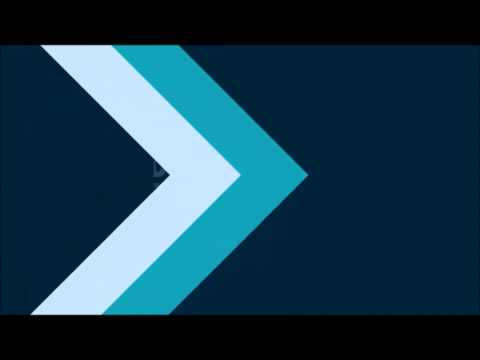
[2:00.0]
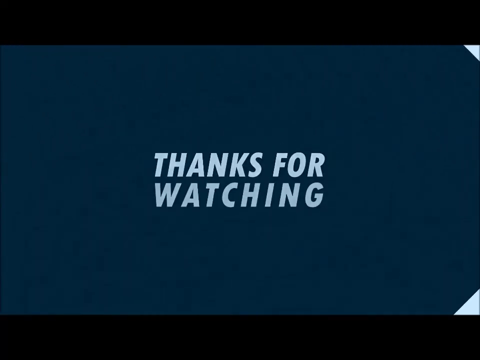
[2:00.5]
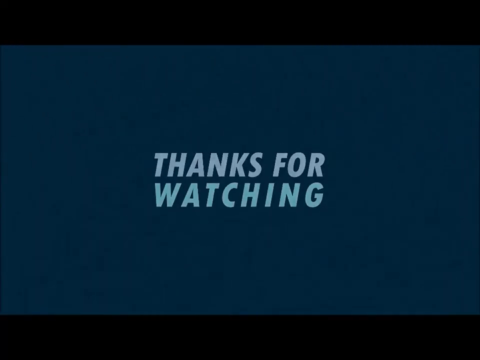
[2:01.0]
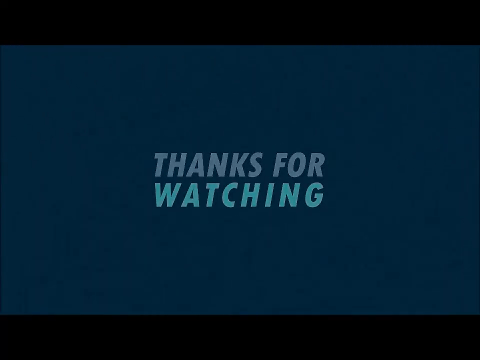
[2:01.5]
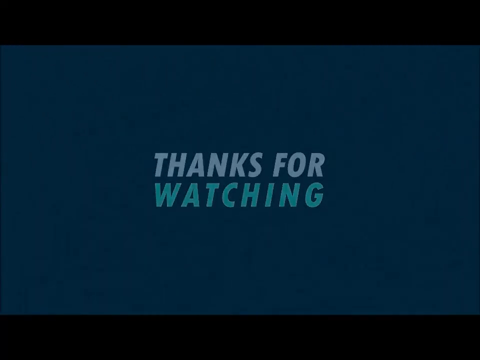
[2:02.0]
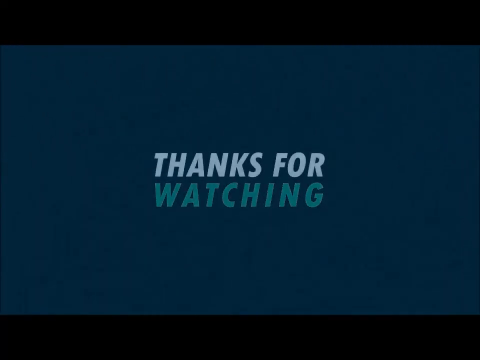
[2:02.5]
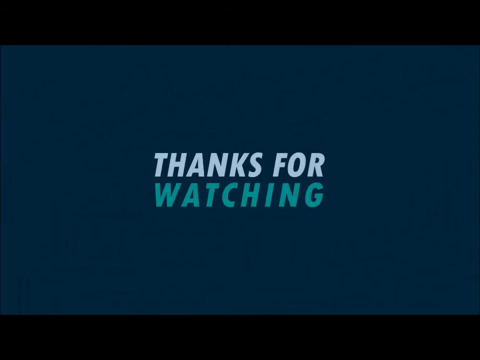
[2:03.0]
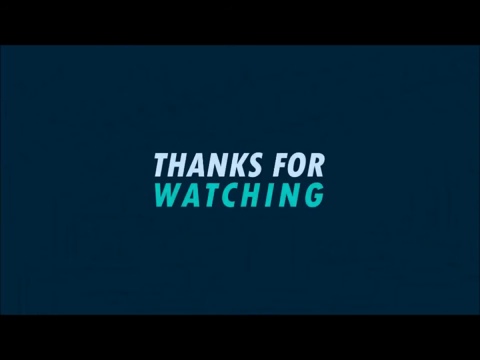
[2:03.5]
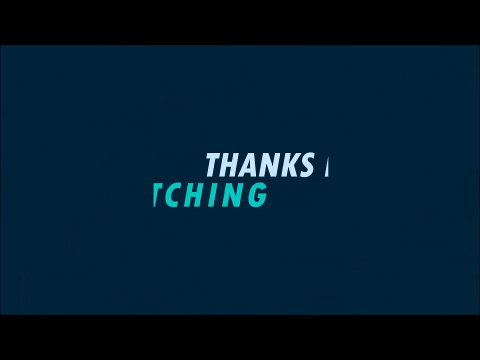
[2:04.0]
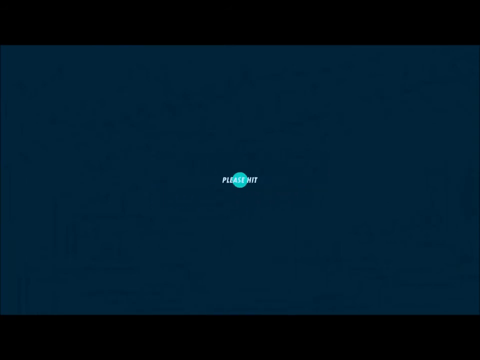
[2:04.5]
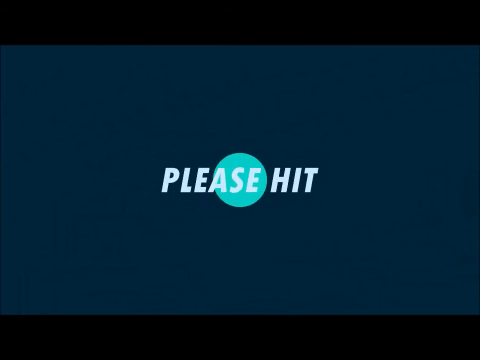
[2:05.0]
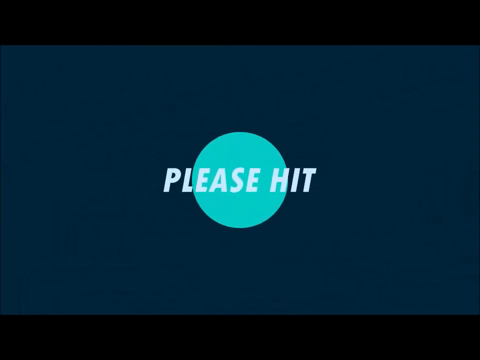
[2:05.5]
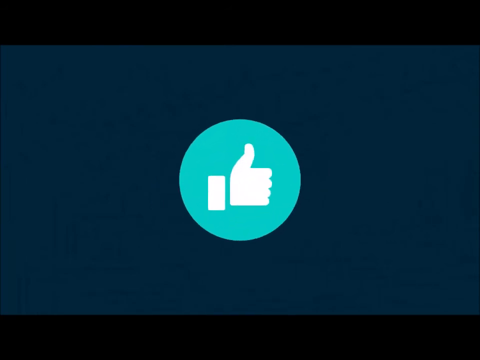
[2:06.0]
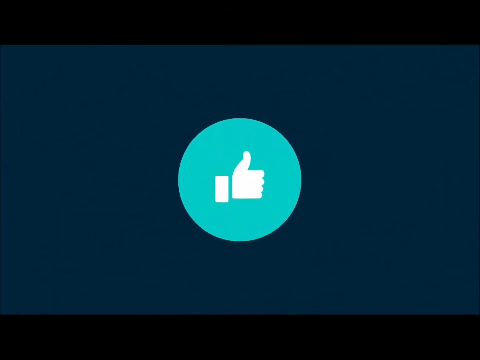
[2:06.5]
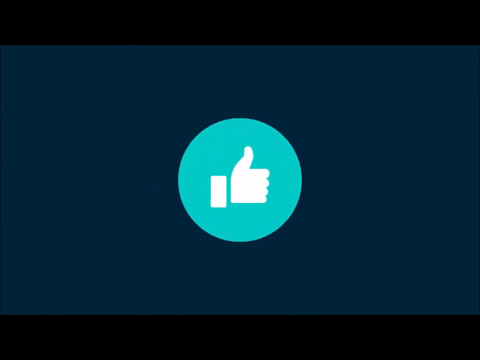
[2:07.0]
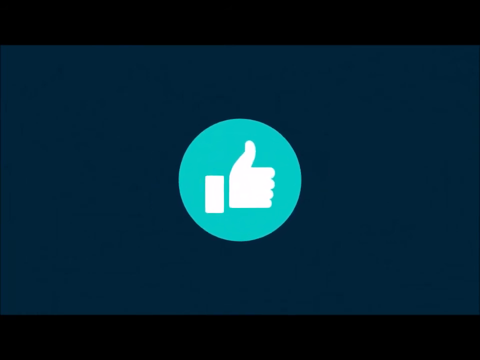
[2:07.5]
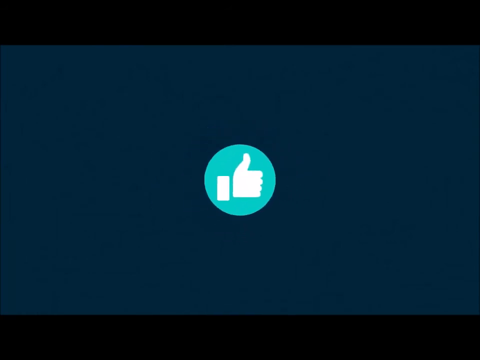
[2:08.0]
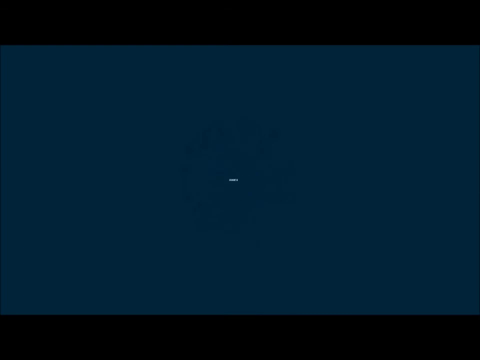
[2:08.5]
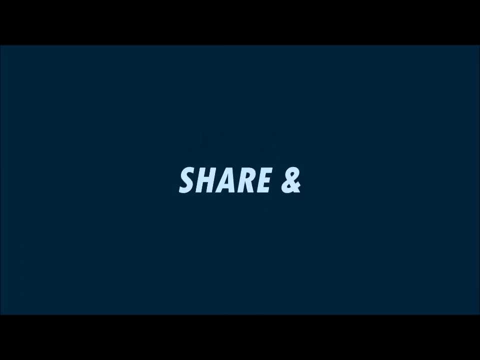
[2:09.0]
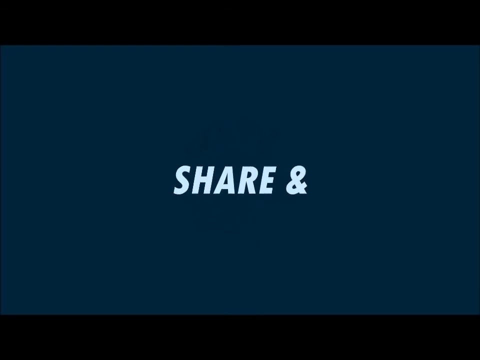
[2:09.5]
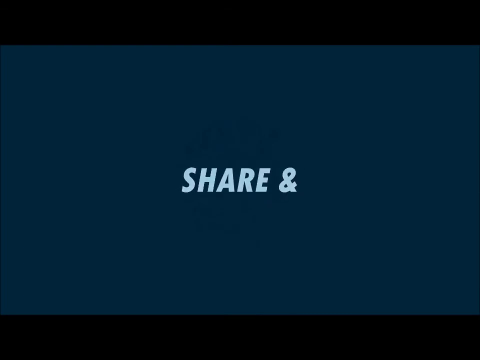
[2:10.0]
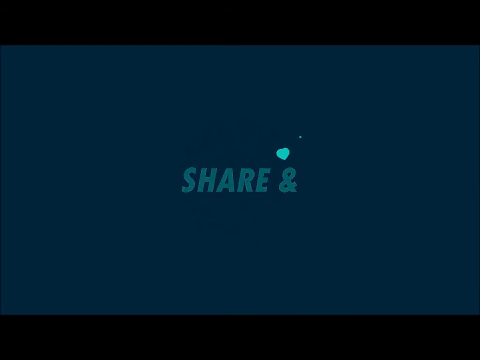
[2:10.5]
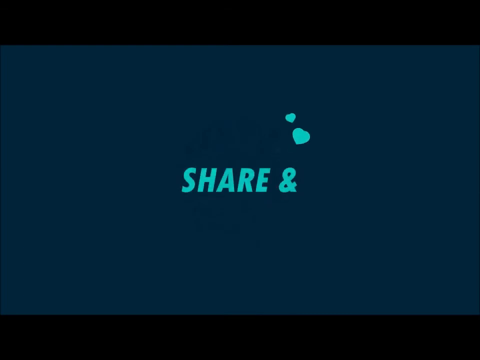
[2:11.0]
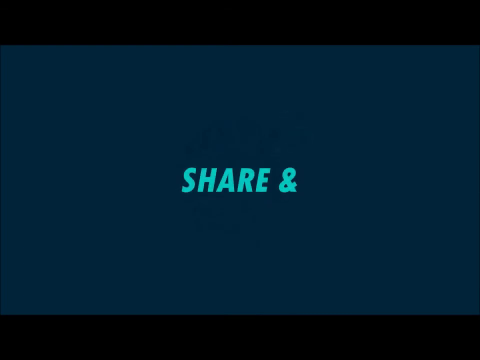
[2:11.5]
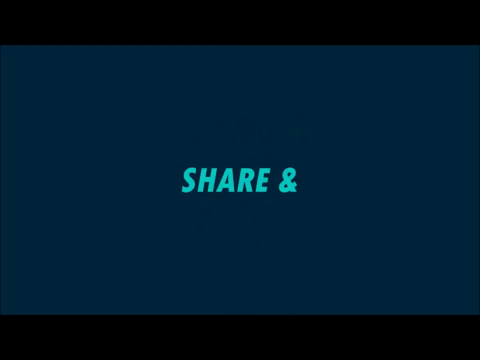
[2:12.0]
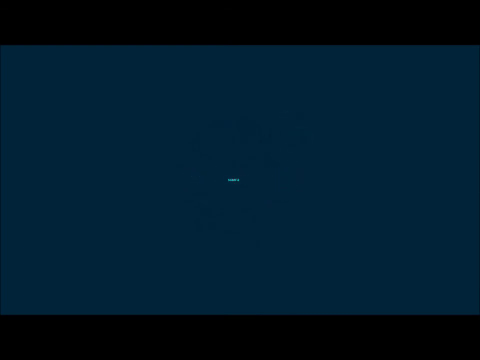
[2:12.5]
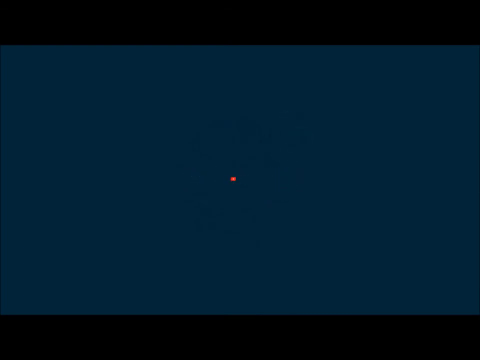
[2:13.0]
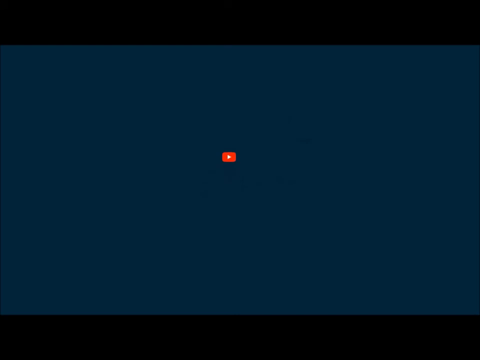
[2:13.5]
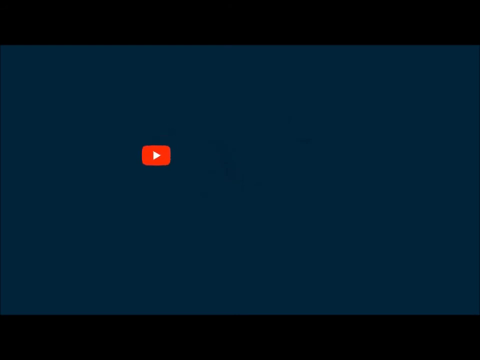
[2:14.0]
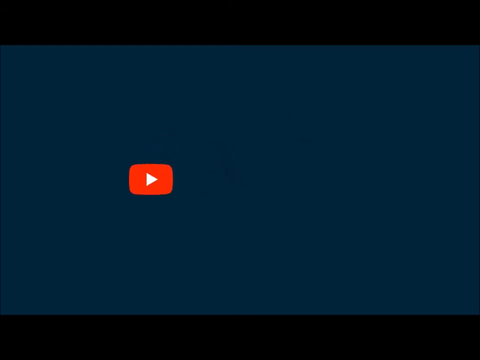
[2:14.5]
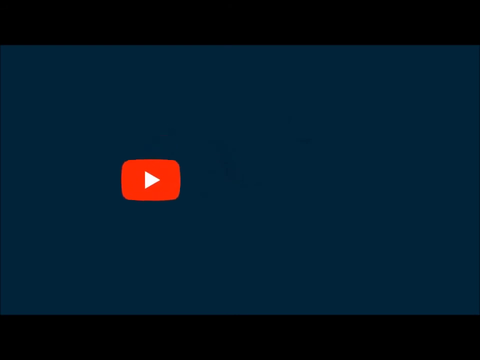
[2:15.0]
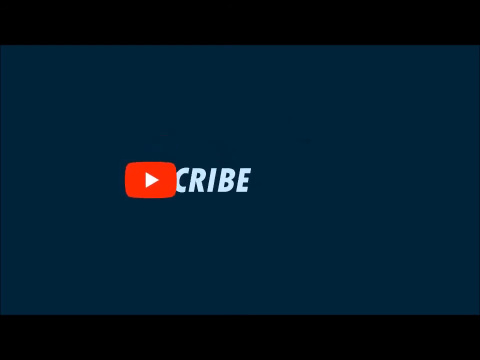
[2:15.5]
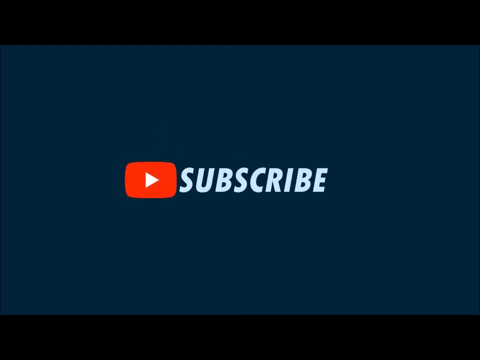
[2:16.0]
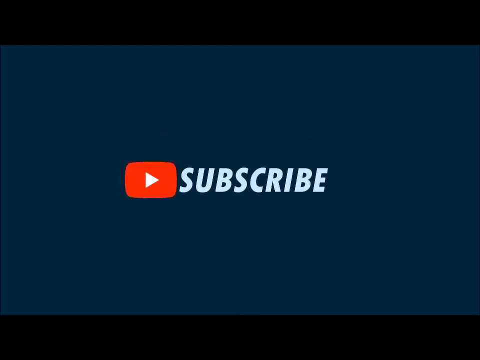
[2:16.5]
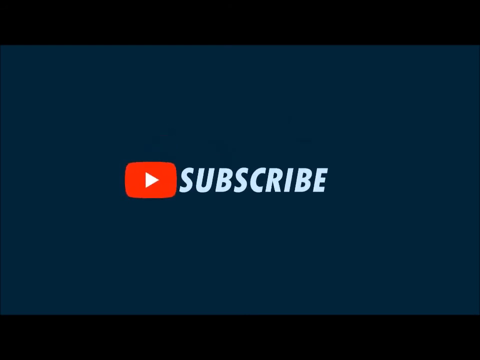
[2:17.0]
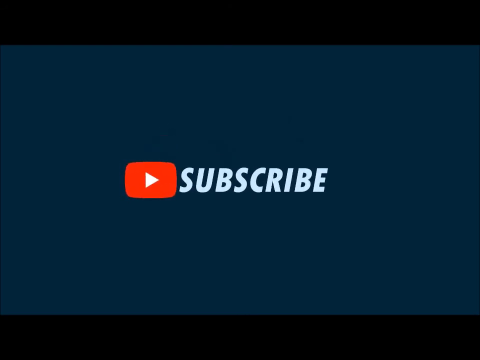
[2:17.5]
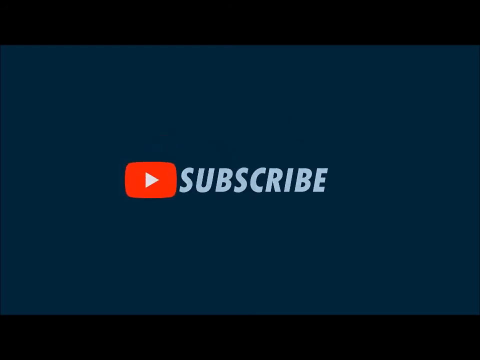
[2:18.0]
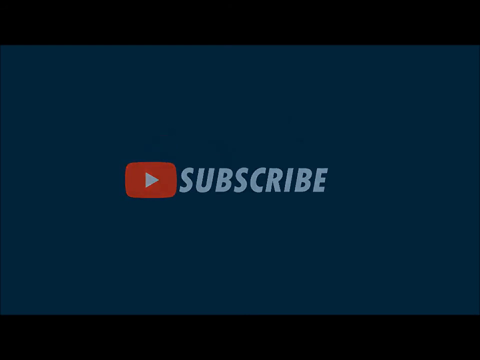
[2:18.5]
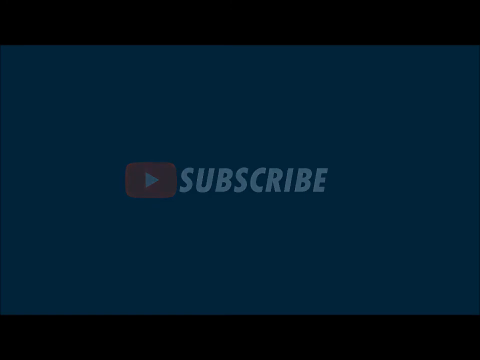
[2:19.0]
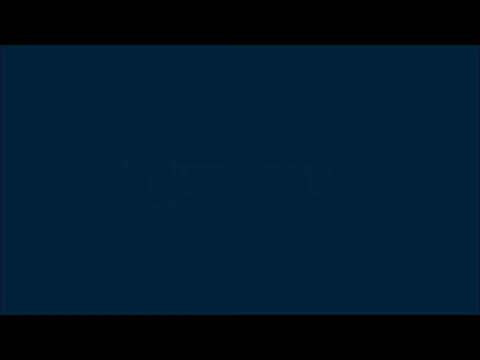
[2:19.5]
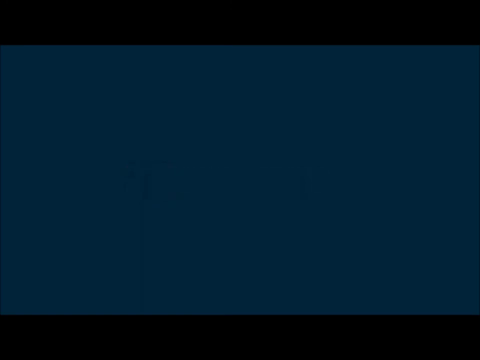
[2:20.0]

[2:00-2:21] The end screens appear on a blue background with black bars at the top and bottom. Text in capital letters reads "thanks for watching", with "thanks" and "for" in off-white, almost light gray, and "watching" in a bluish green. Next, the words "please hit" appear with a thumbs-up icon in a circle, showing a hand with the thumb up. Then the text "share &" appears and disappears, followed by a red and white YouTube logo, a red rounded rectangle with a white triangle that looks like a play button, with the word "subscribe" in all caps next to it. No channel name is shown.